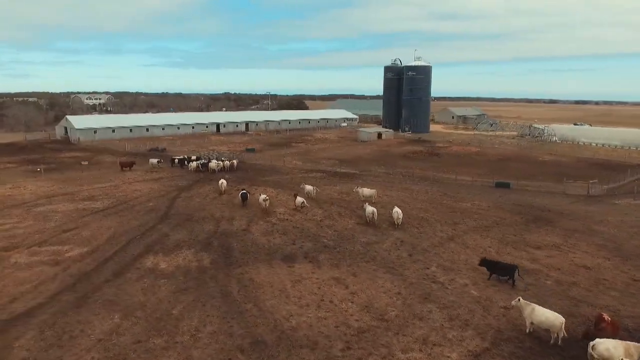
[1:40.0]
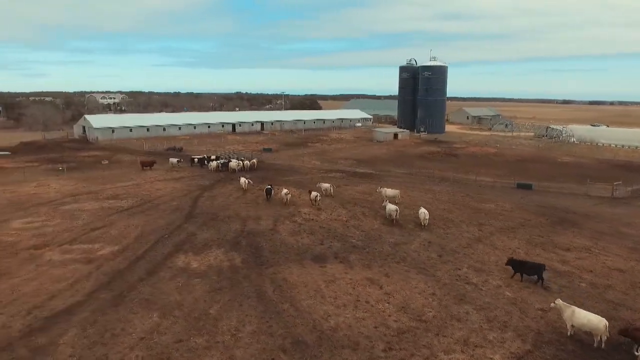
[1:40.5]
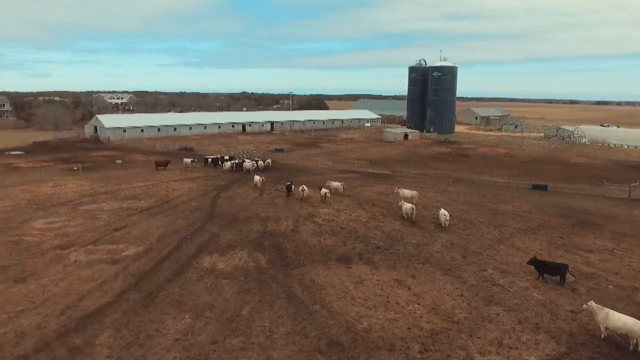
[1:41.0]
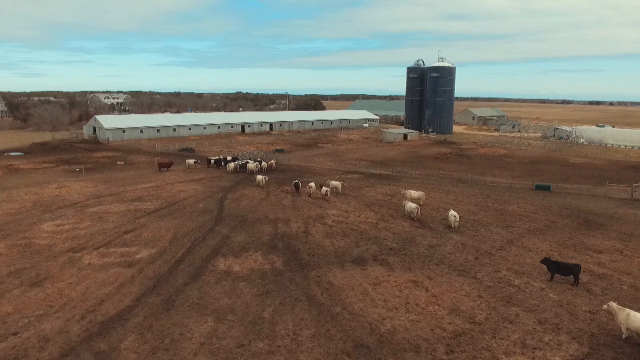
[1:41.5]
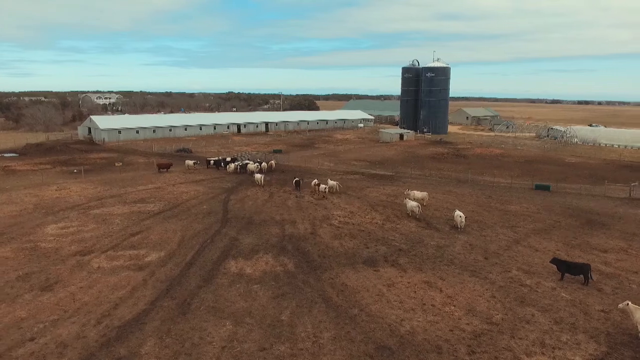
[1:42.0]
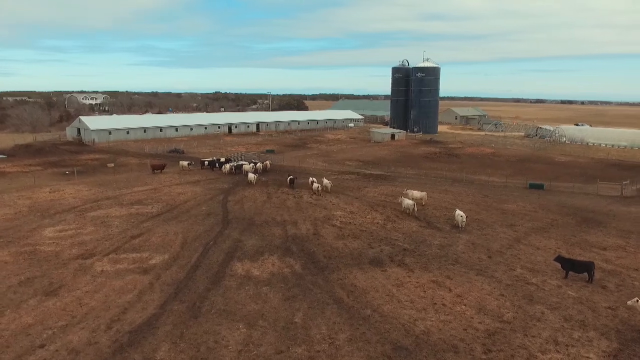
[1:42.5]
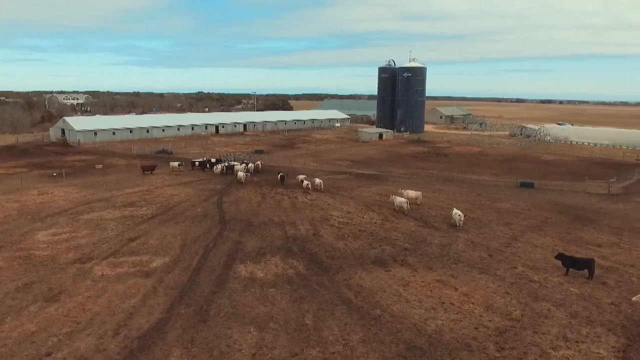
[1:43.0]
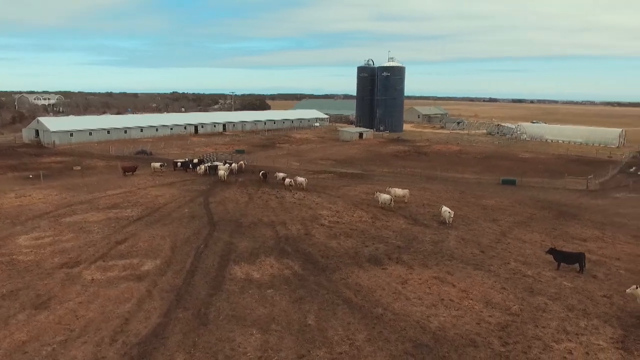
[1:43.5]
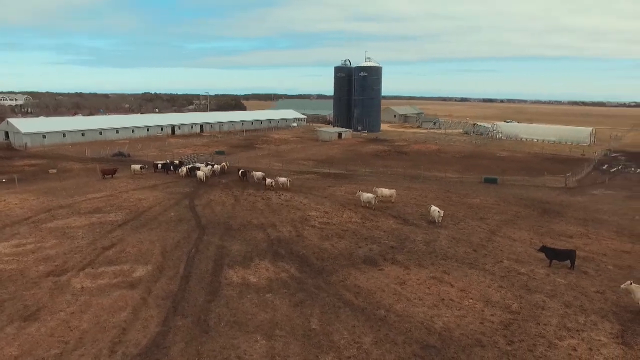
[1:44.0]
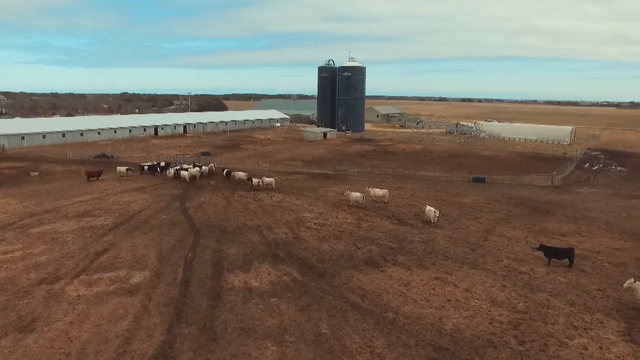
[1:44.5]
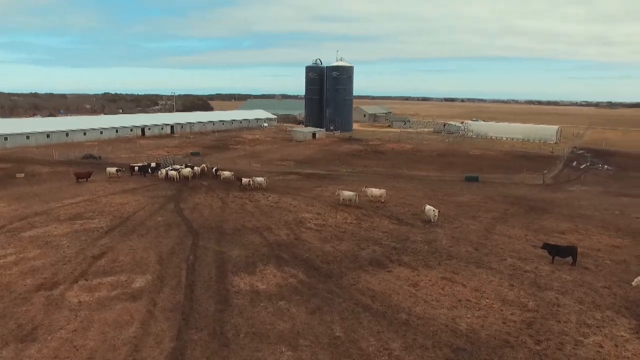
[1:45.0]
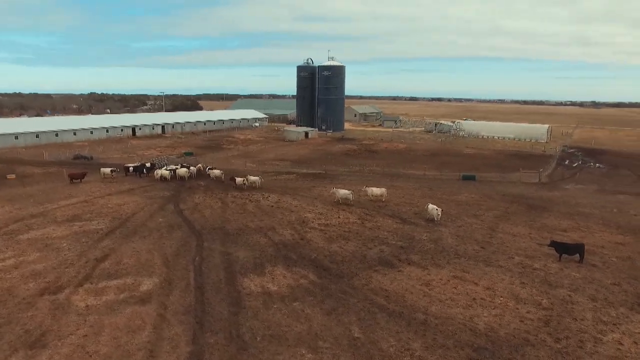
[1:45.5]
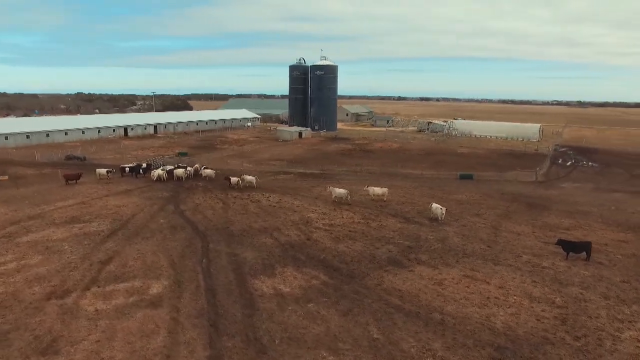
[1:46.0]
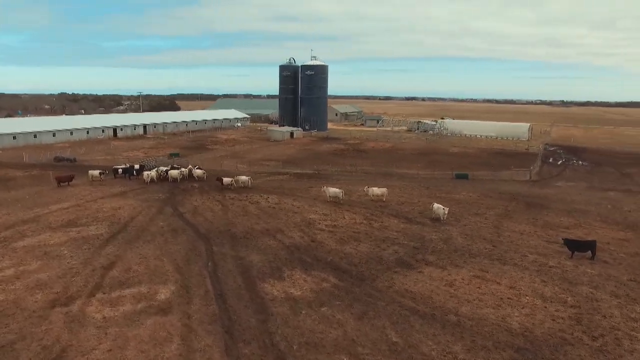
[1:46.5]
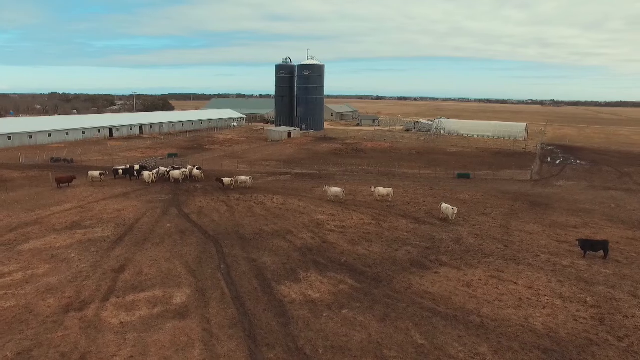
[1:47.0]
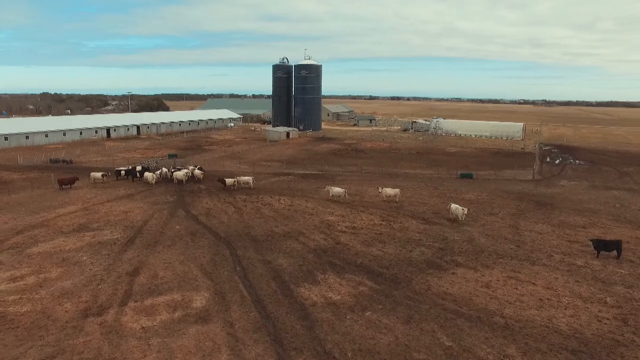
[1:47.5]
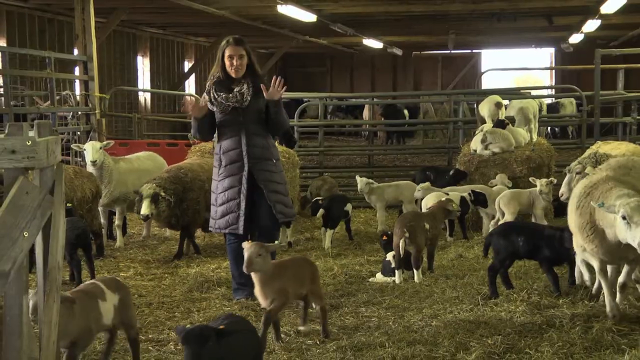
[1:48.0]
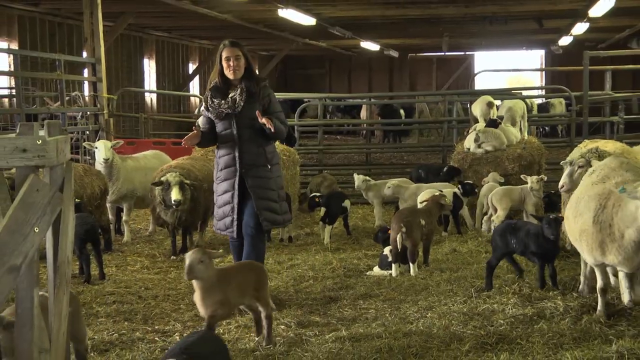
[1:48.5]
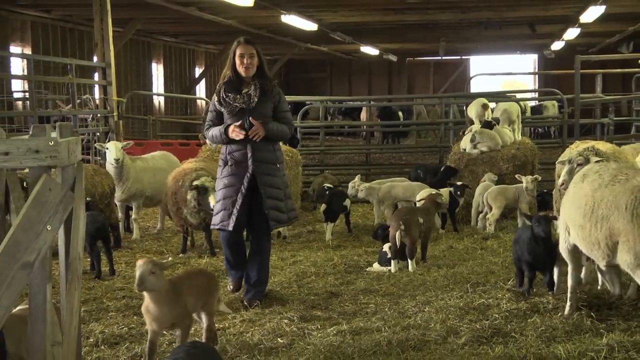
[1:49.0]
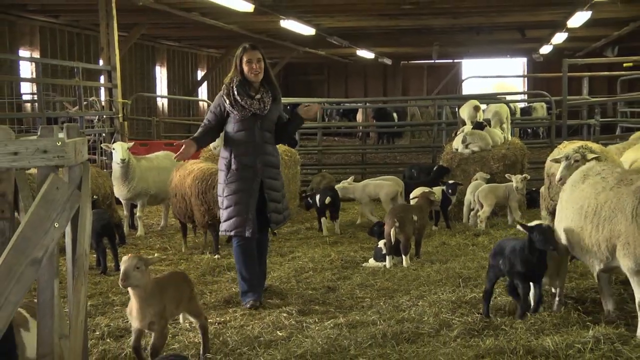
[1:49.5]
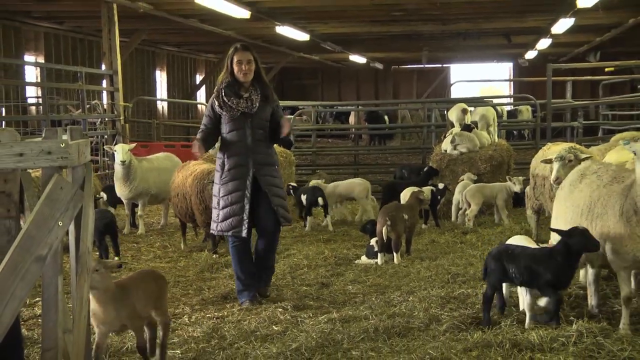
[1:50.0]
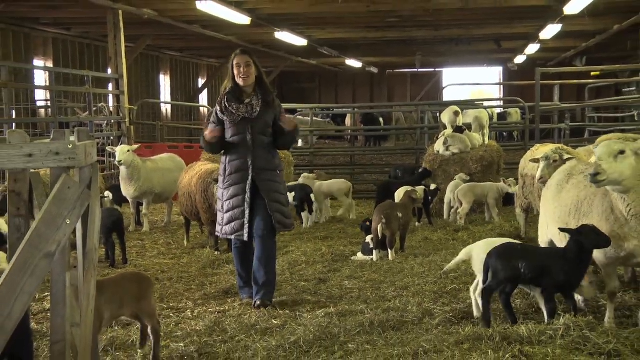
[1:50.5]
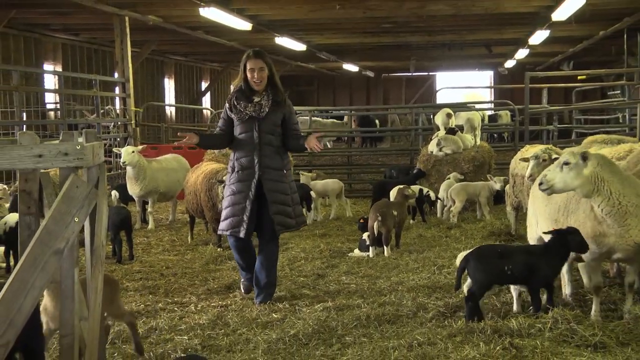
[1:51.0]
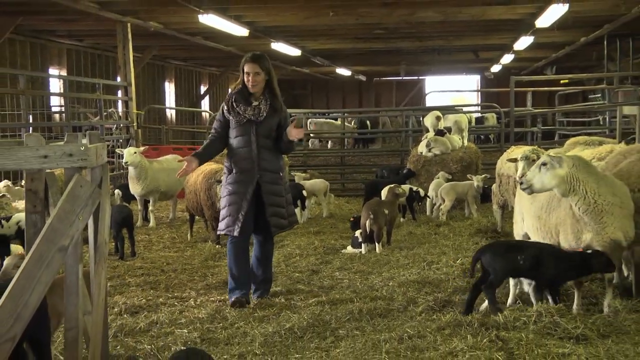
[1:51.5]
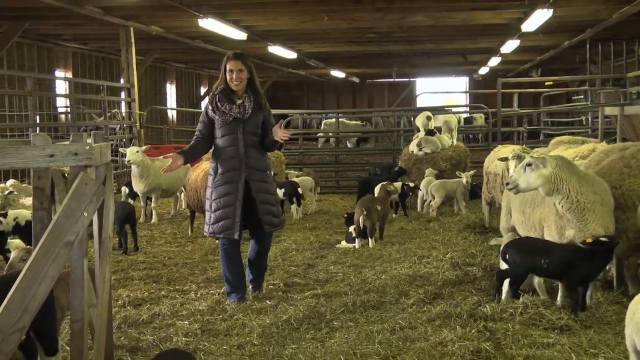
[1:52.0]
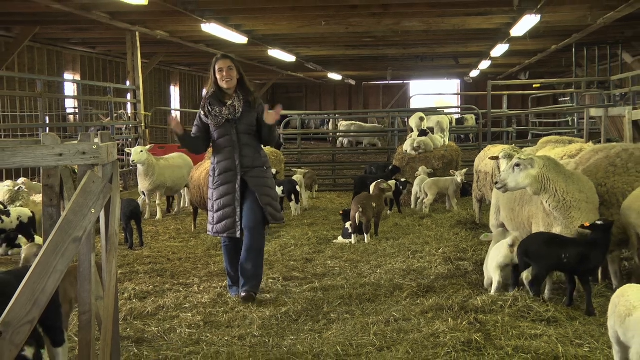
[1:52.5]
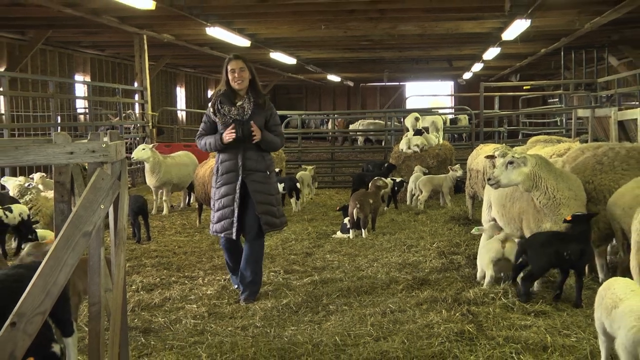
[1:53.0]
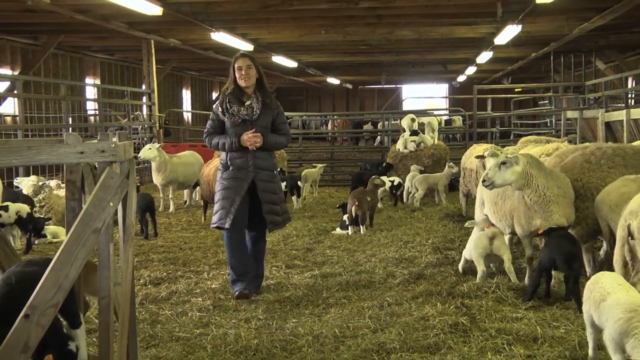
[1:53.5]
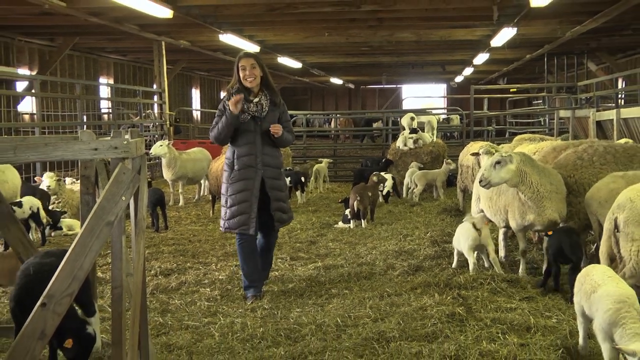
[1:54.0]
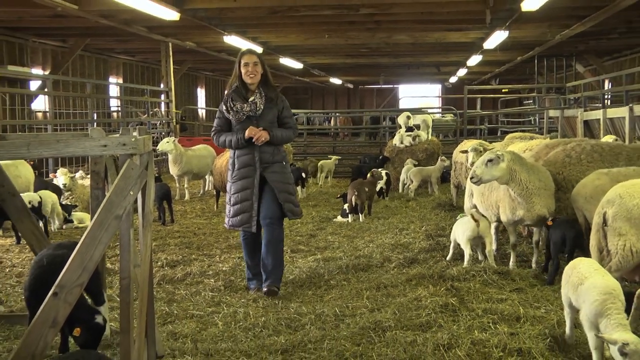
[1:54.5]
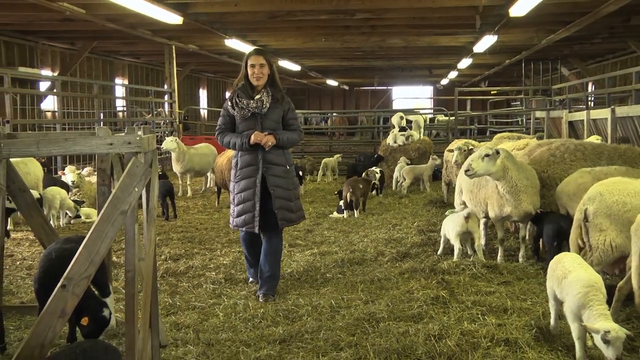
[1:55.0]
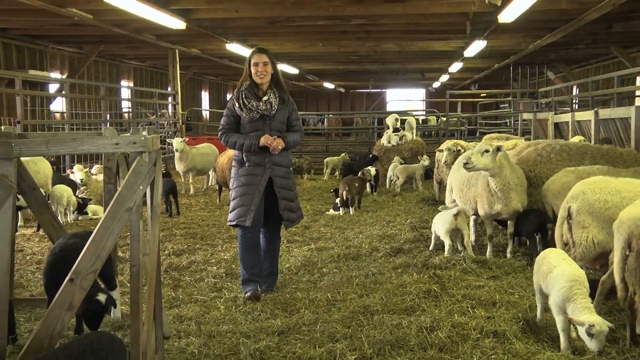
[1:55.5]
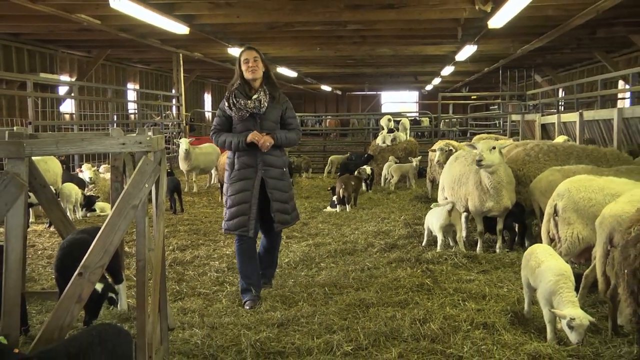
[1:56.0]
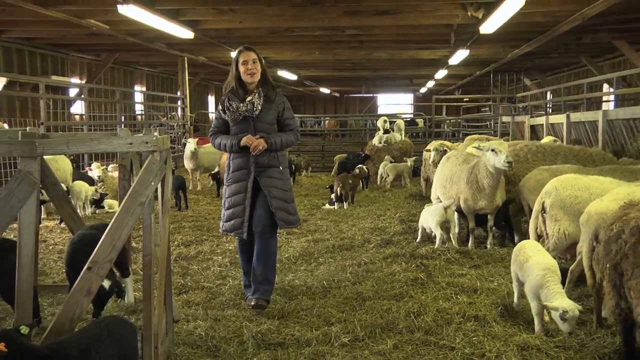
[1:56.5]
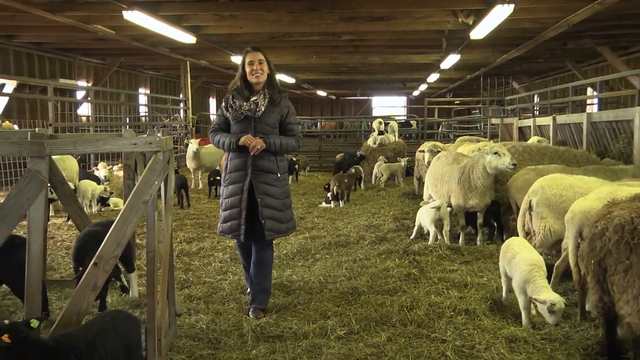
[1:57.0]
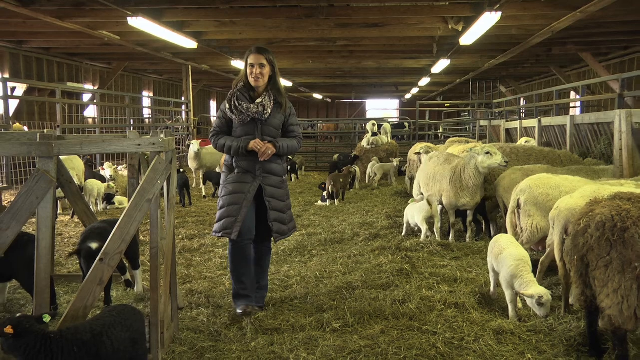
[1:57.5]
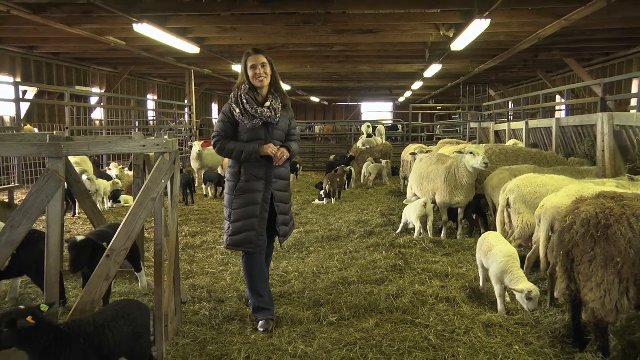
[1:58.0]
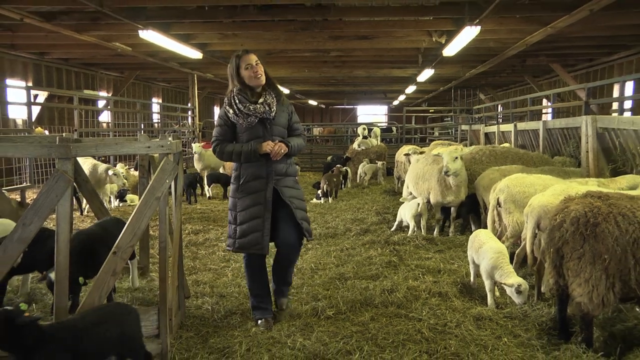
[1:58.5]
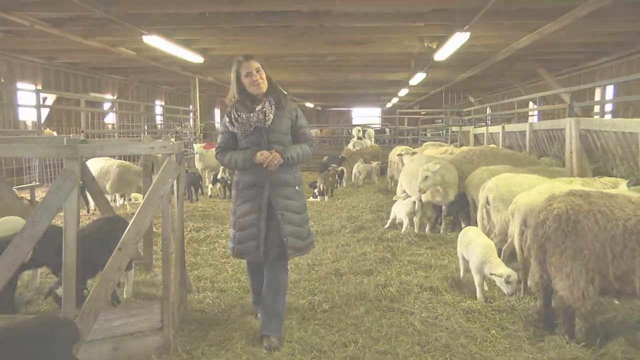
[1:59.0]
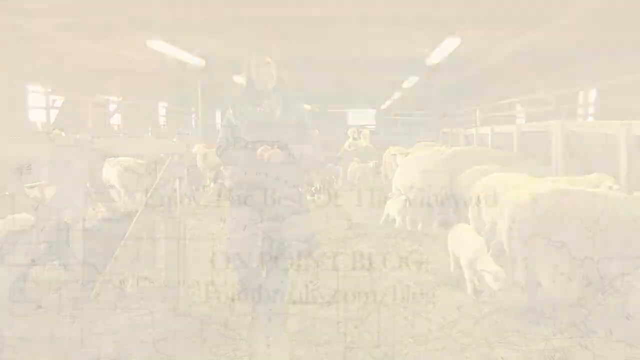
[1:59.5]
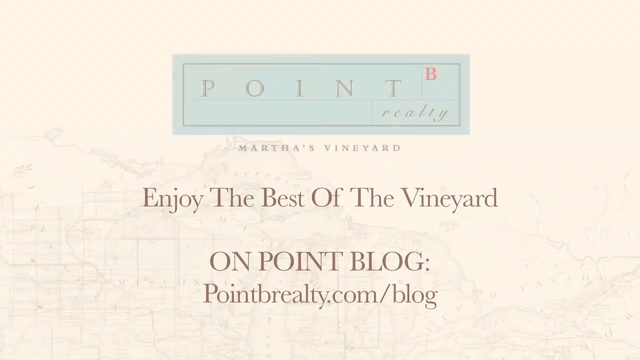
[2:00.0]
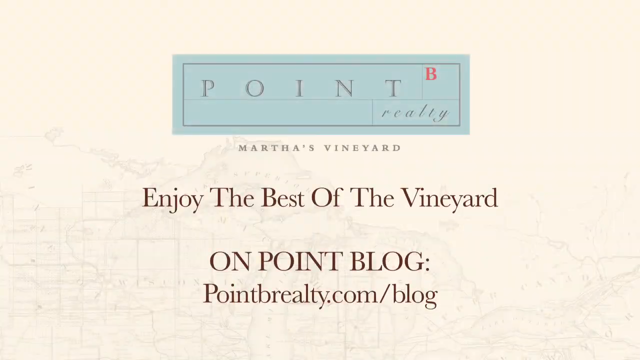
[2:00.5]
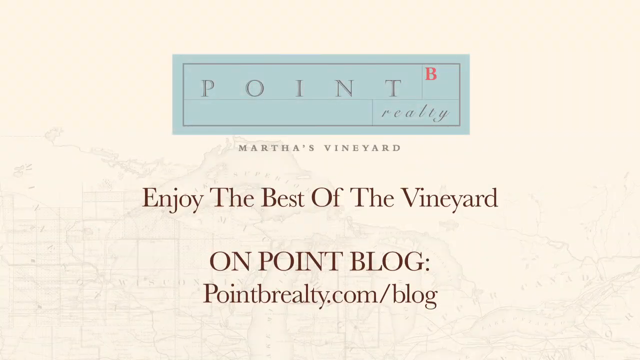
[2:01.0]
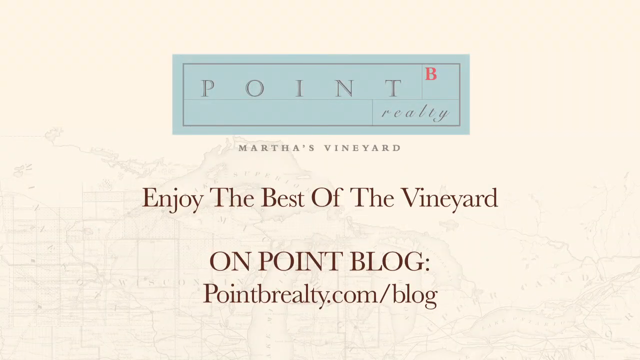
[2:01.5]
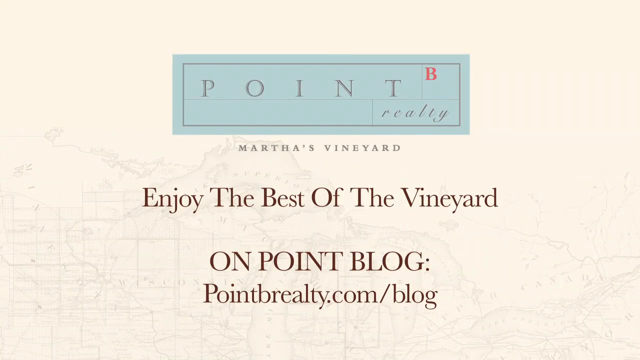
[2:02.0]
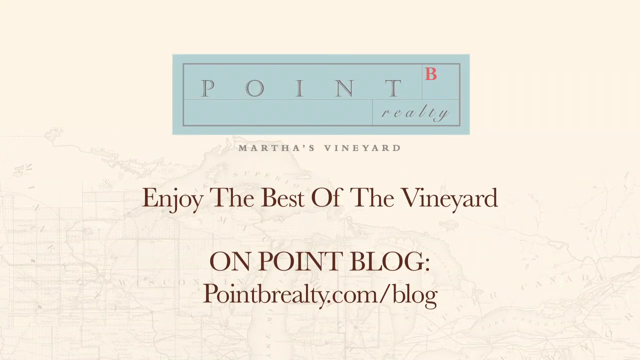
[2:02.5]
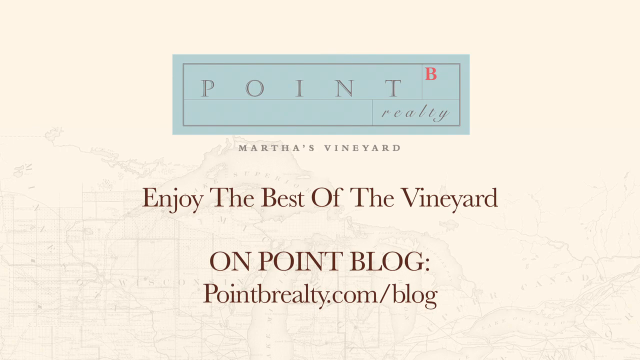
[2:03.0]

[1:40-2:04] An overhead aerial shot of the farm shows the cows running towards the gated area, with the two black towers in the distance and the farm building next to them. The cows seem to be gathering towards the entry point. Back in the farm building, Guinevere stands in the sheep enclosure and walks towards the camera, surrounded by lambs and sheep of various colours. She smiles as she talks. With her arms outstretched and palms out, she gradually brings them together and links her fingers, points to the camera, and then links her fingers again. As she continues walking, the camera backs away. A final screen shows the pale blue Point Reality B box against the pale map, with the titles "Martha's Vineyard", "Enjoy the best of the vineyard on Point Blog" and "point reality.com/blog".